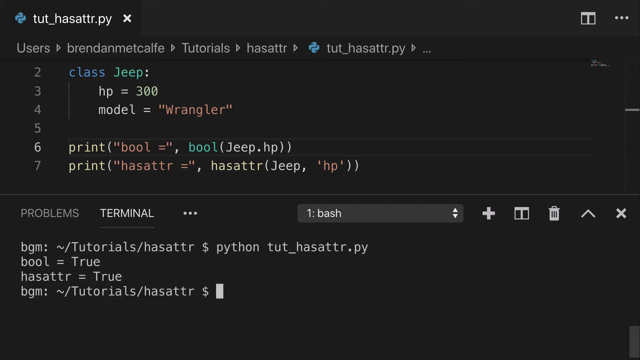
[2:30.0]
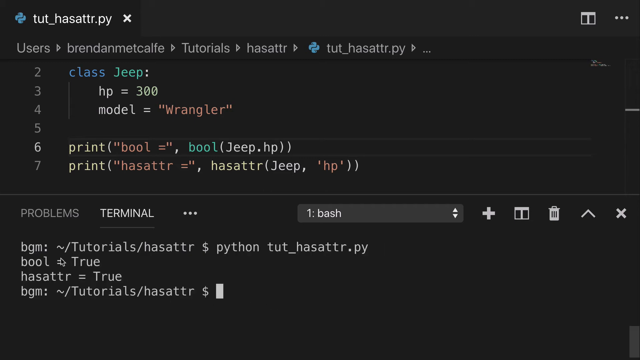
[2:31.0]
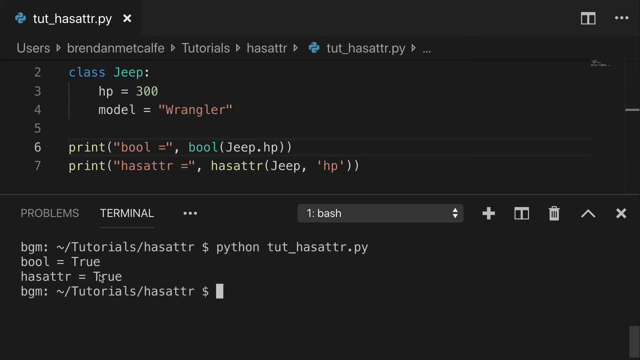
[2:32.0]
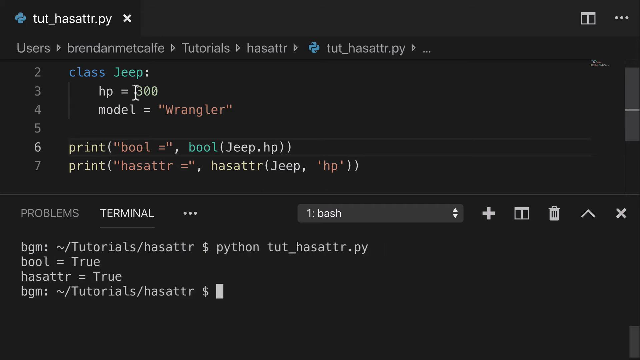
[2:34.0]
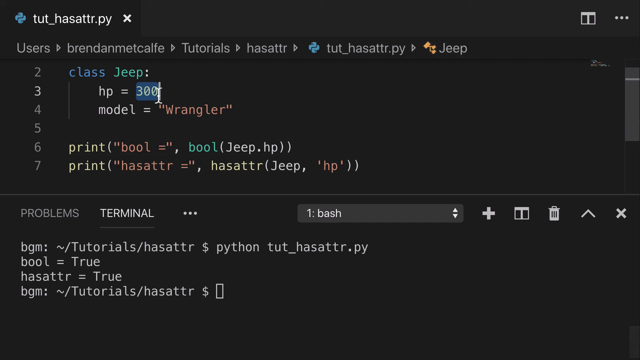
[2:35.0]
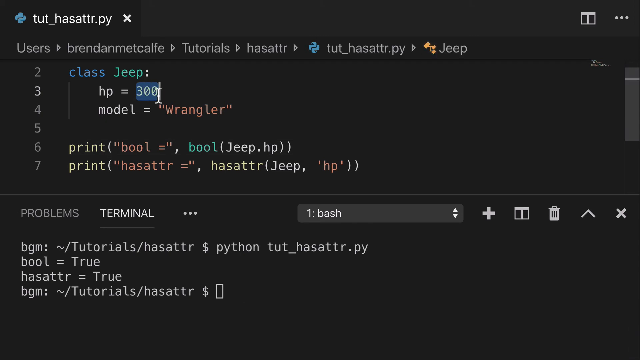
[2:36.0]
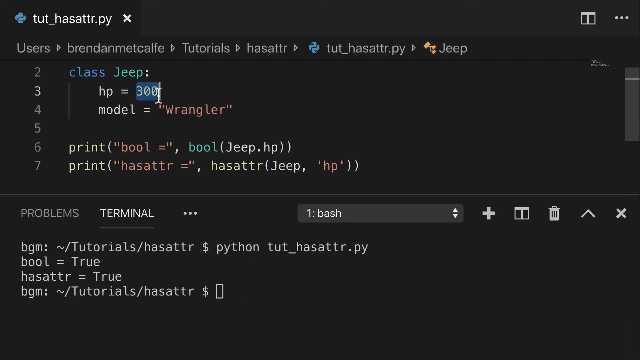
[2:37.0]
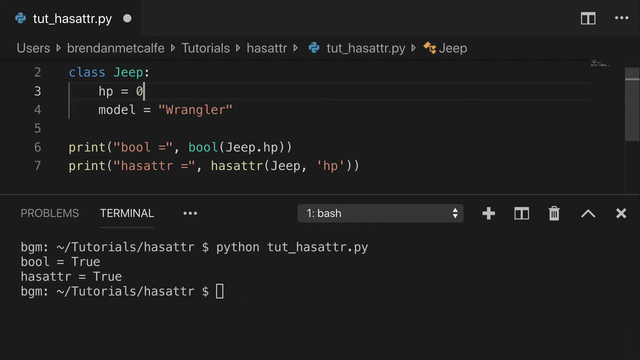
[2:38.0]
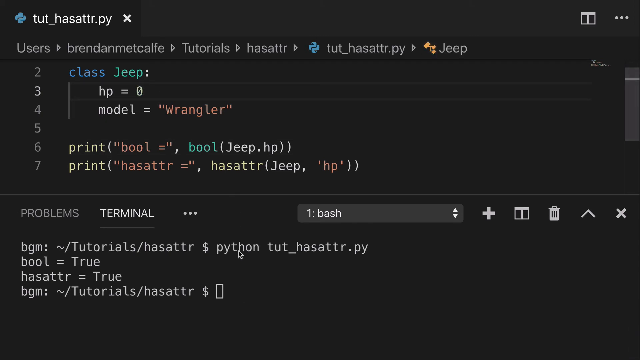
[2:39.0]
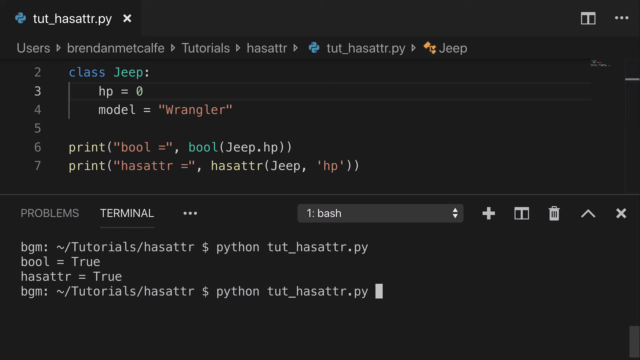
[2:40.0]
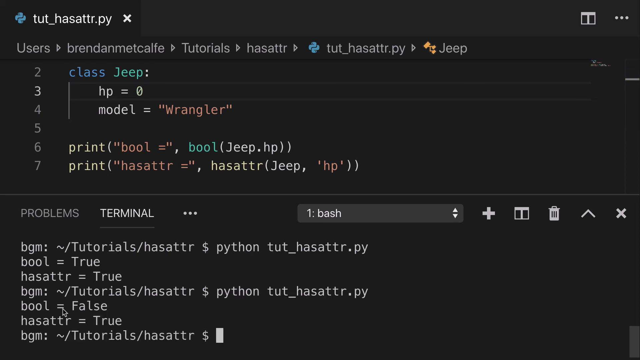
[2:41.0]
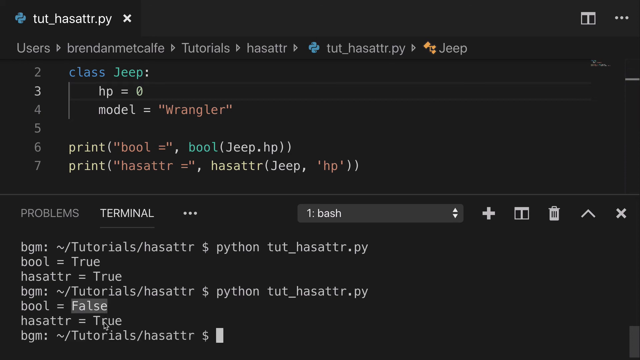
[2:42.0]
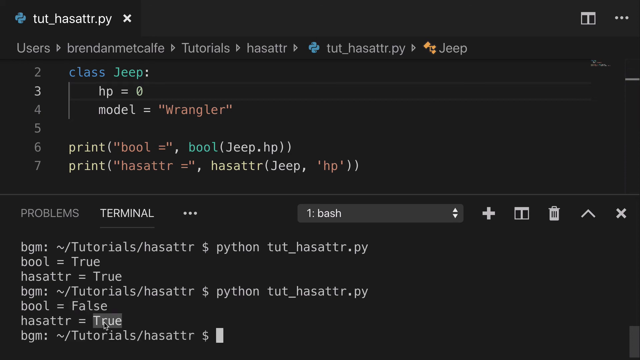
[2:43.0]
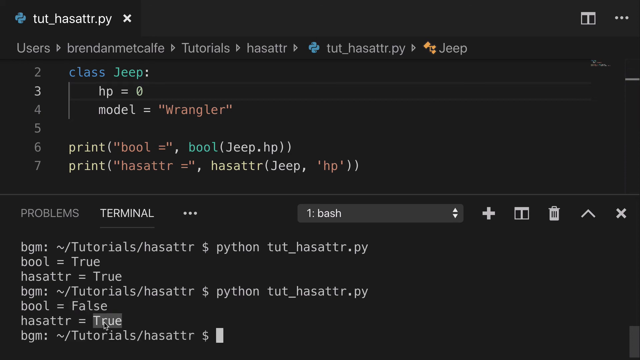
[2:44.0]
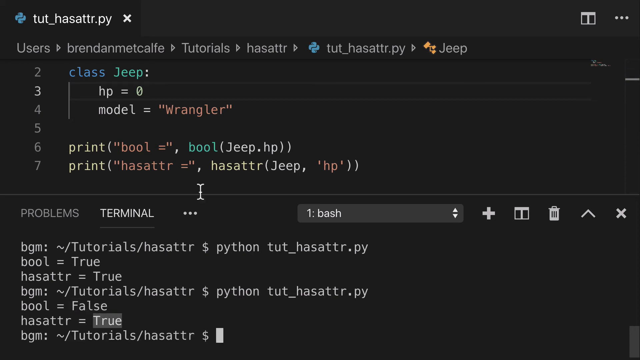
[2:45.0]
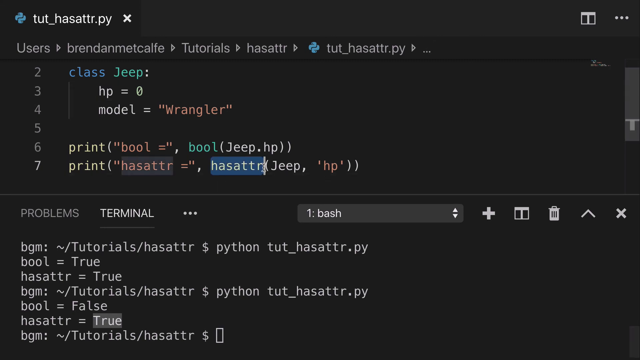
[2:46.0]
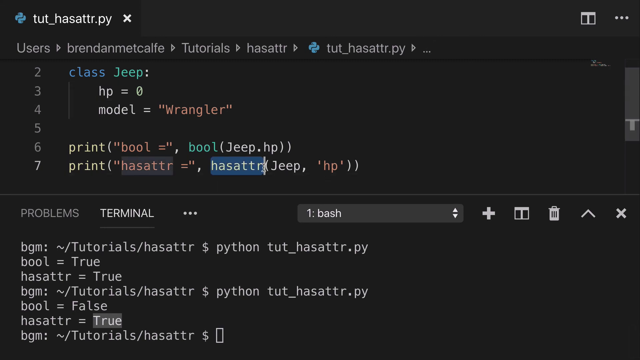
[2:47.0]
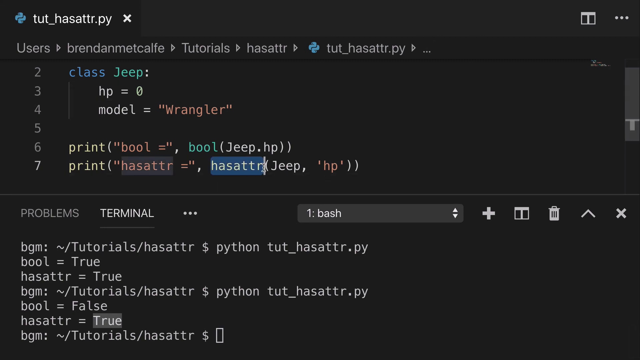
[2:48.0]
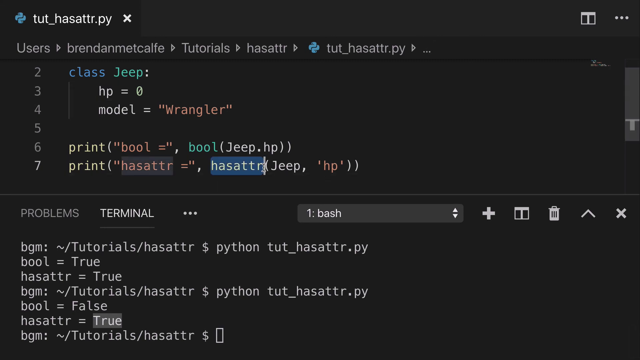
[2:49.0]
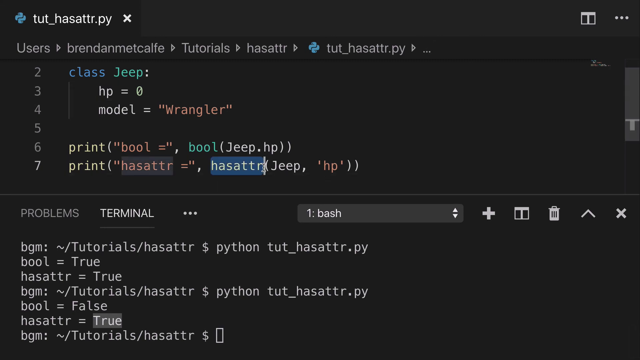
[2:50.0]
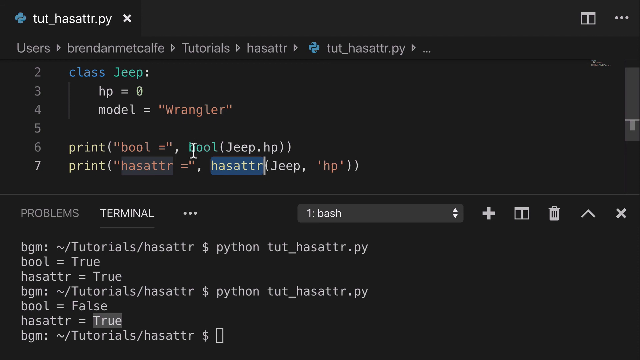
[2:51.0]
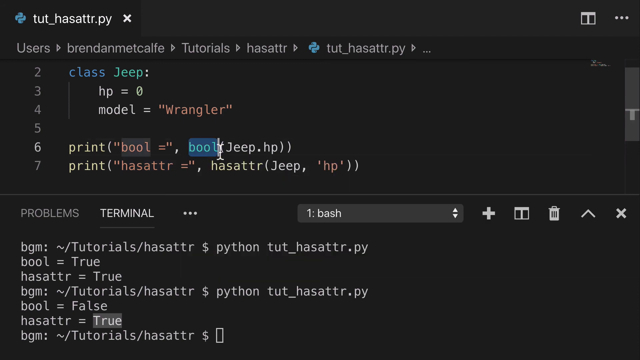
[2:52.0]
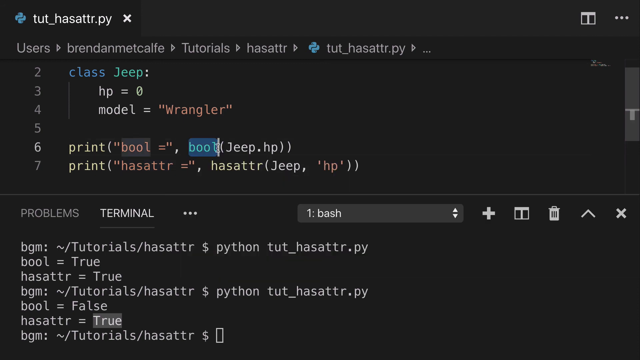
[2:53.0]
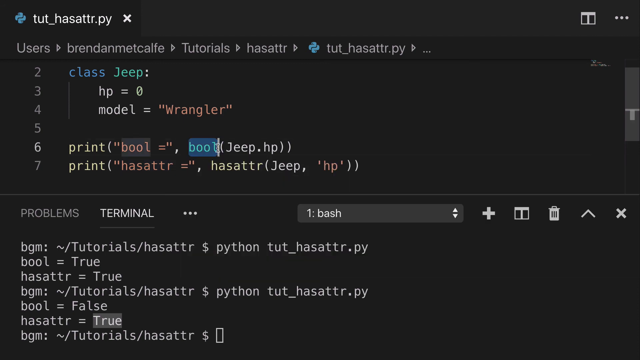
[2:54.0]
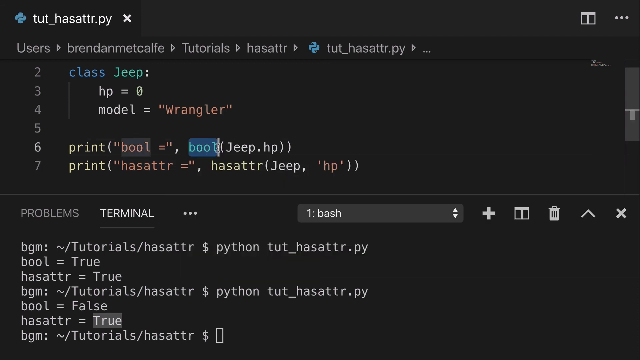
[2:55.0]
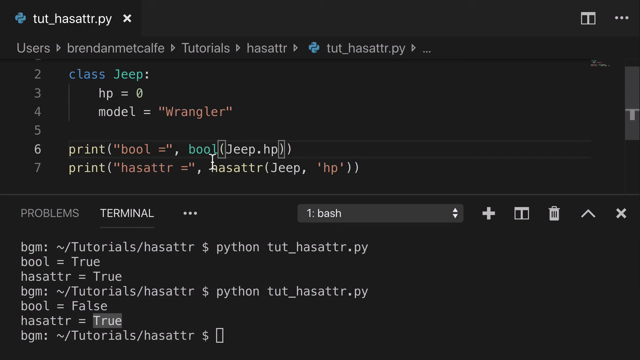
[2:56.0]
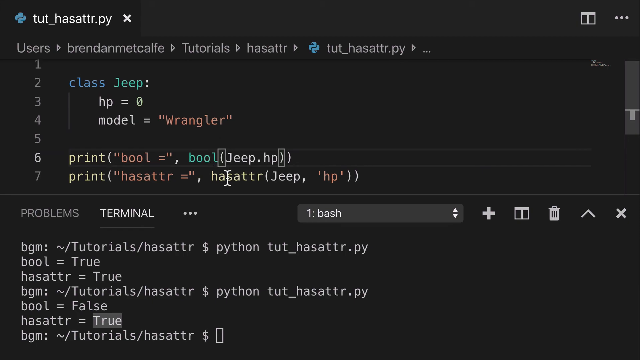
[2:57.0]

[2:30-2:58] A Python code editor with a dark black background shows the file tut_hasattr.py. The screen is divided horizontally into two portions, with code in the upper portion and the terminal in the lower portion. The code has 7 lines, with code written on lines 2, 3, 4, 6 and 7. In the terminal, the code has already been run, with the output "bool=true, hasattr=true". The mouse hovers over this output, then moves back to the code's third line, which reads "hp=300". The 300 is selected and replaced with 0, and the code is run again. The output is now "bool=false, hasattr=true". The "false" is first highlighted by selection, then the "true" is highlighted. The mouse moves back to the code's seventh line, where "hasattr" is selected, and then "bool" on the sixth line is selected. A dialog box appears for a second while hovering over these functions. Then the code section of the screen is scrolled to the top.